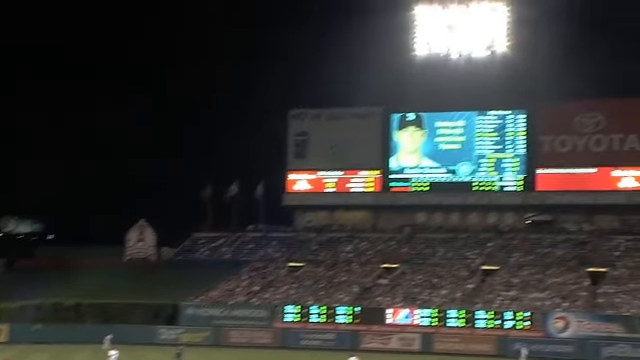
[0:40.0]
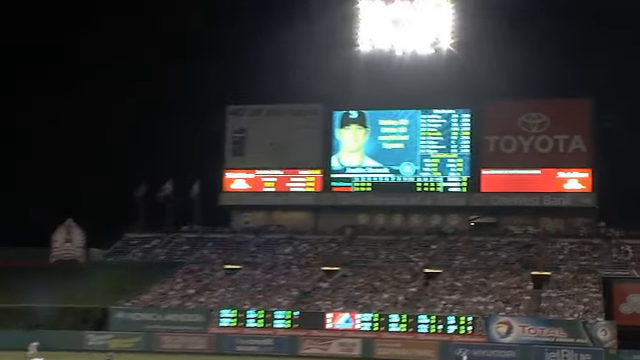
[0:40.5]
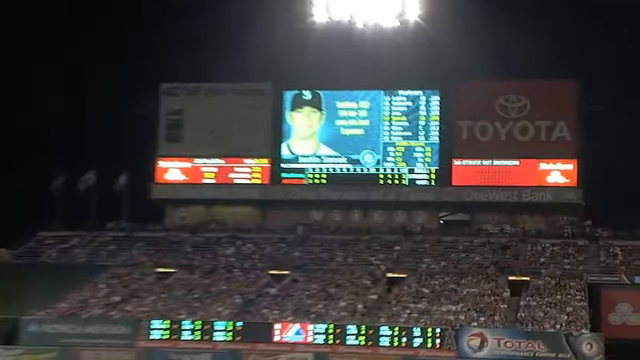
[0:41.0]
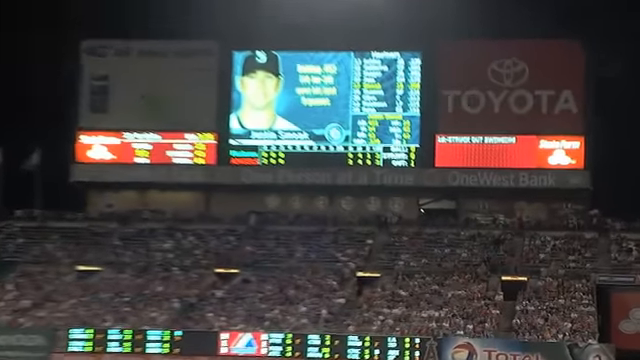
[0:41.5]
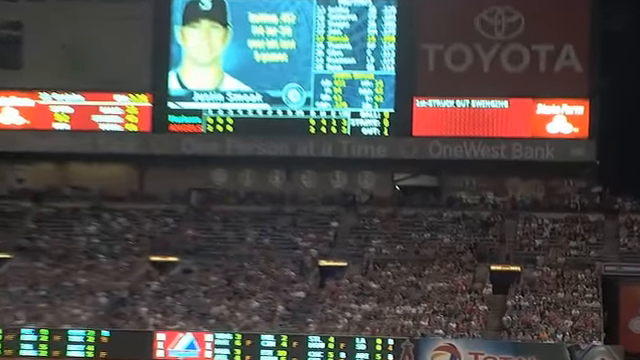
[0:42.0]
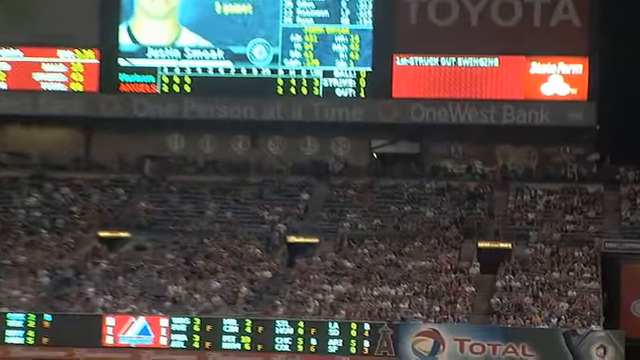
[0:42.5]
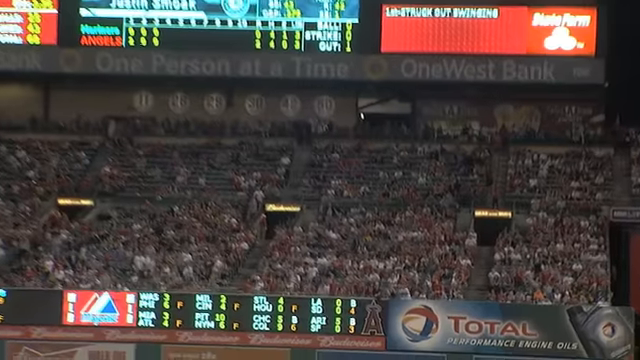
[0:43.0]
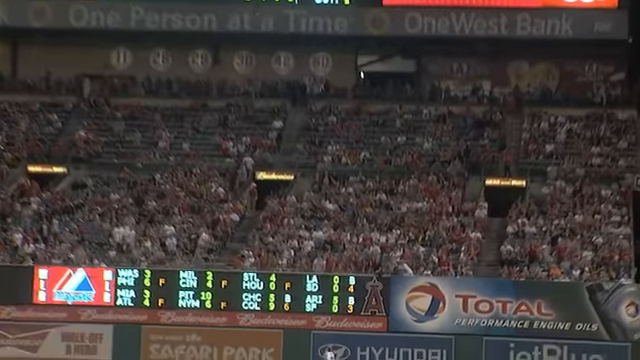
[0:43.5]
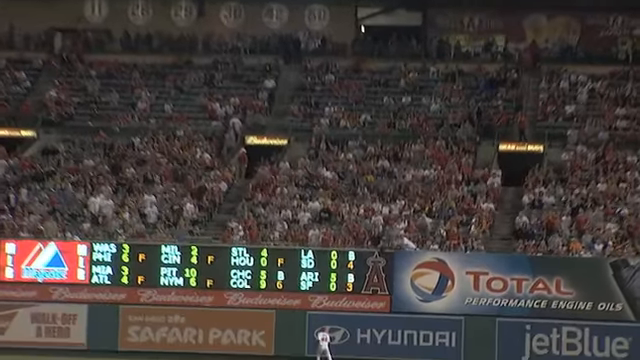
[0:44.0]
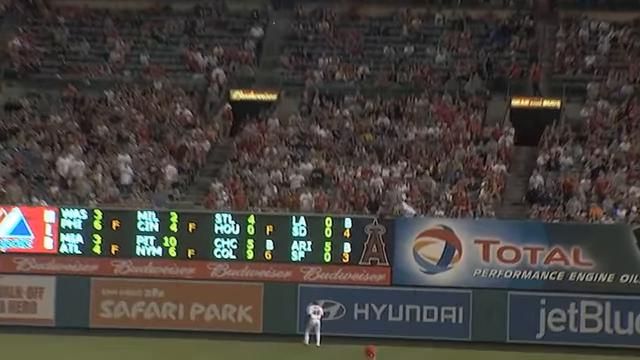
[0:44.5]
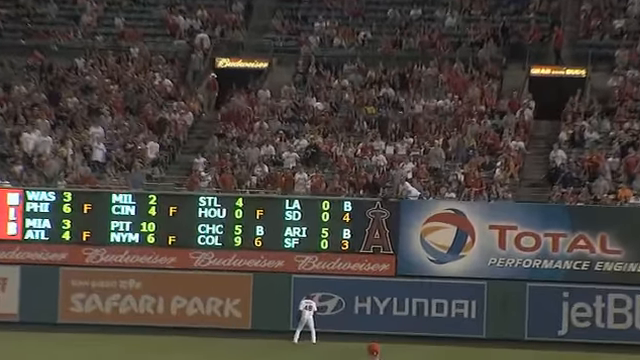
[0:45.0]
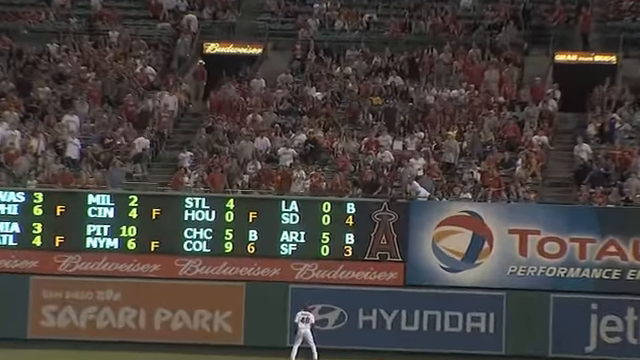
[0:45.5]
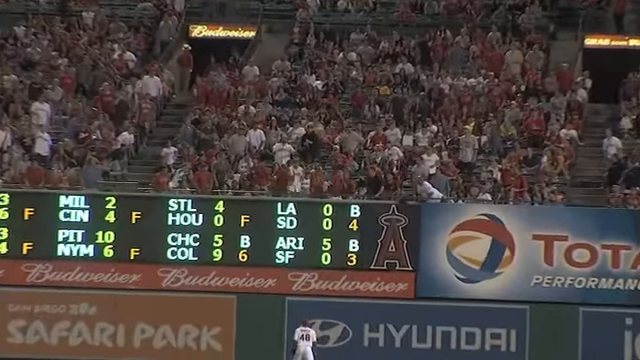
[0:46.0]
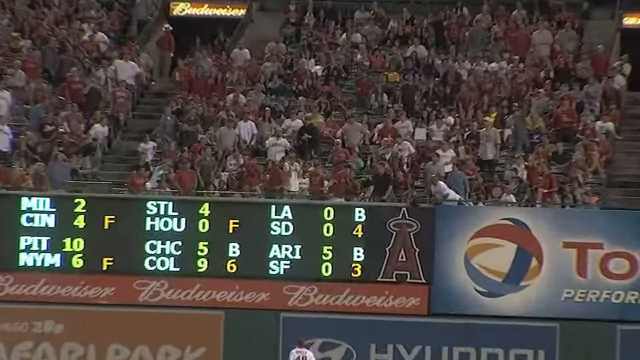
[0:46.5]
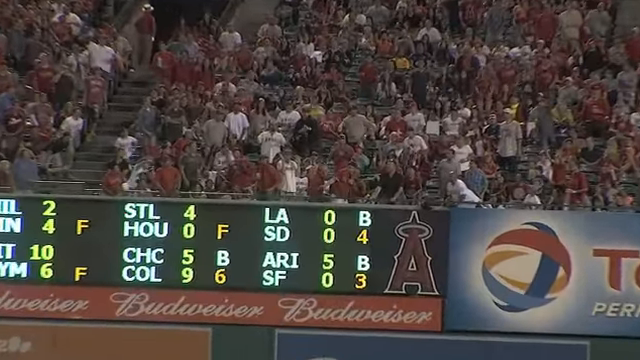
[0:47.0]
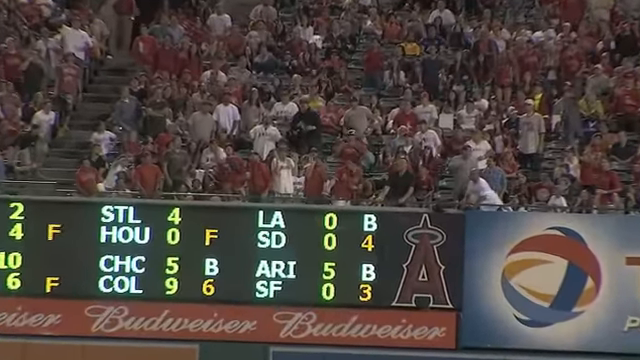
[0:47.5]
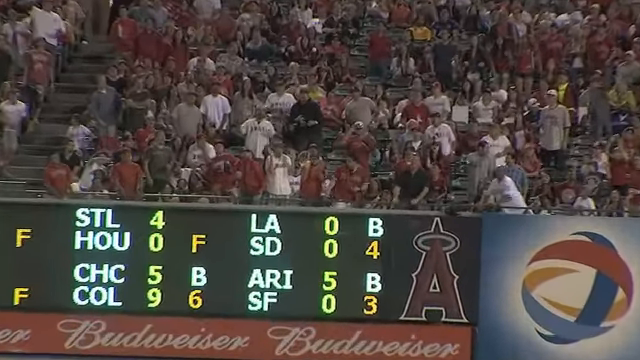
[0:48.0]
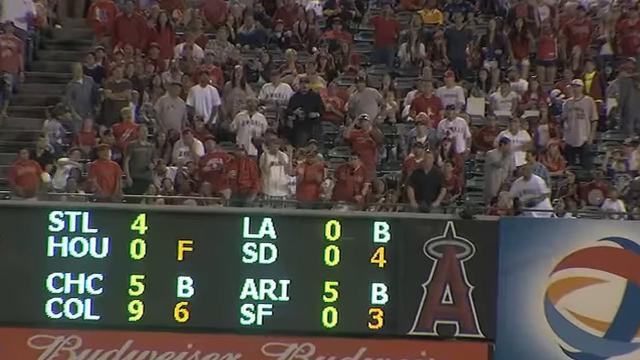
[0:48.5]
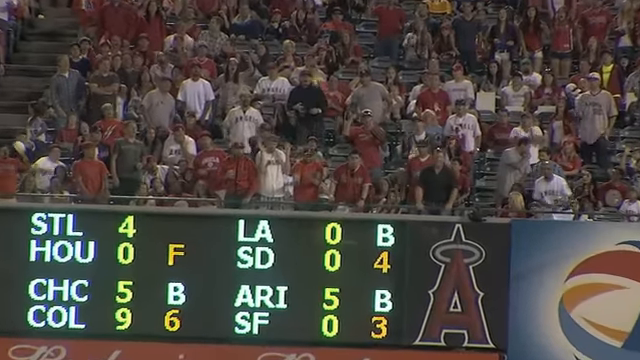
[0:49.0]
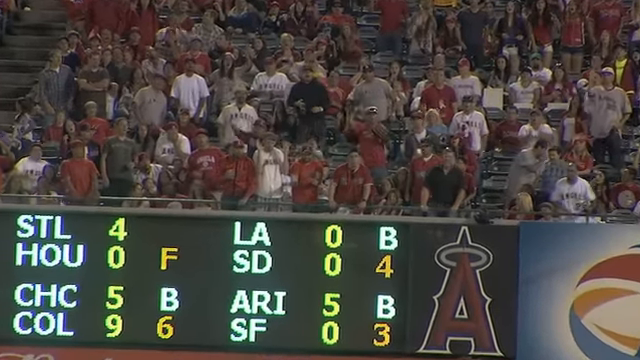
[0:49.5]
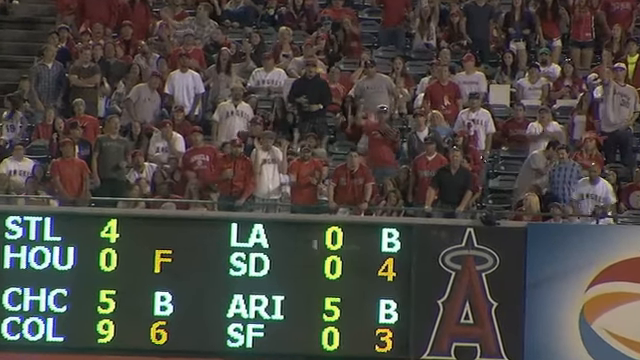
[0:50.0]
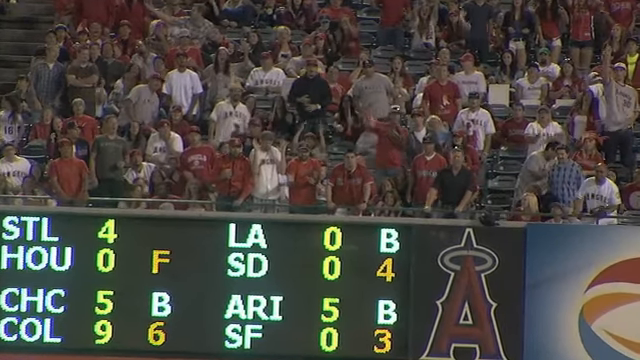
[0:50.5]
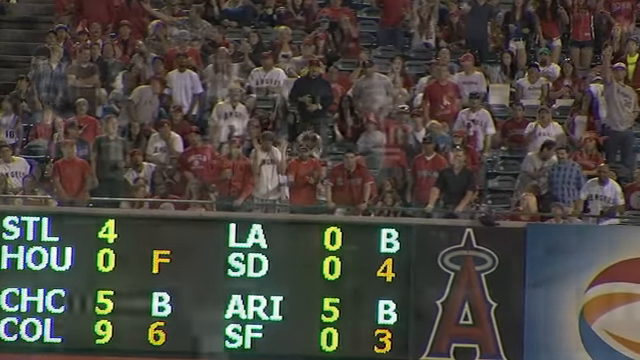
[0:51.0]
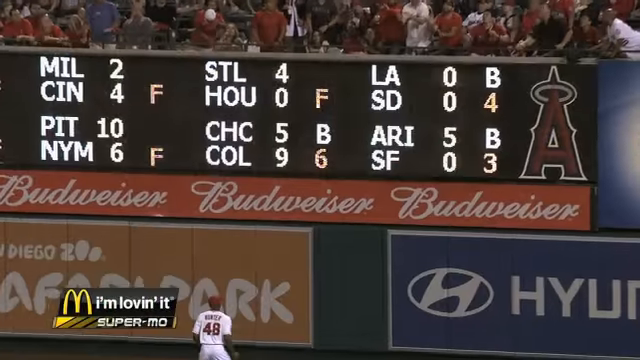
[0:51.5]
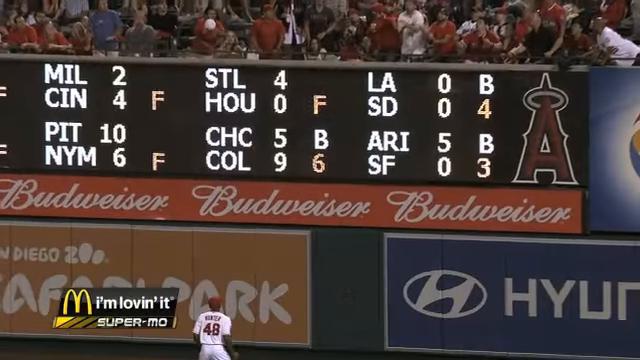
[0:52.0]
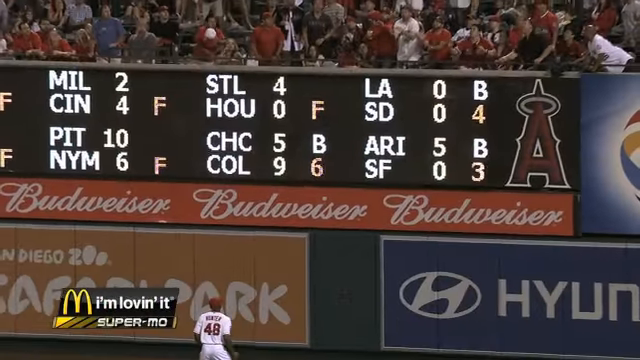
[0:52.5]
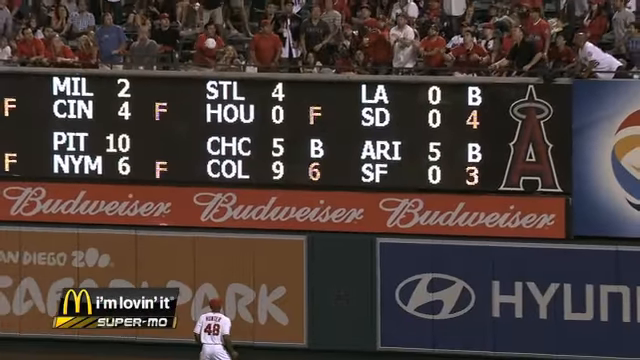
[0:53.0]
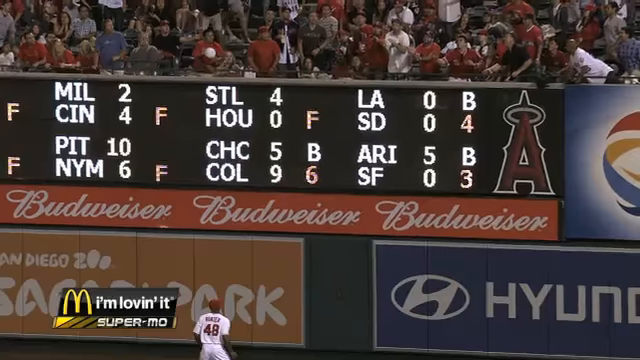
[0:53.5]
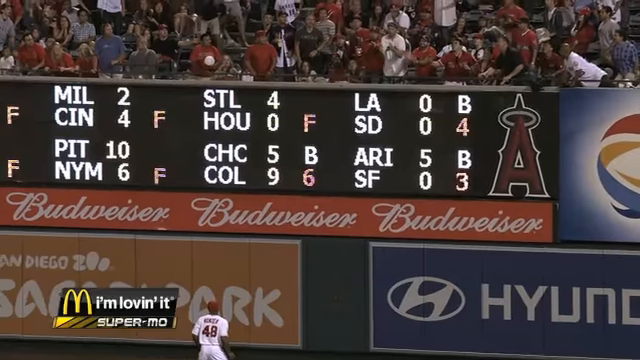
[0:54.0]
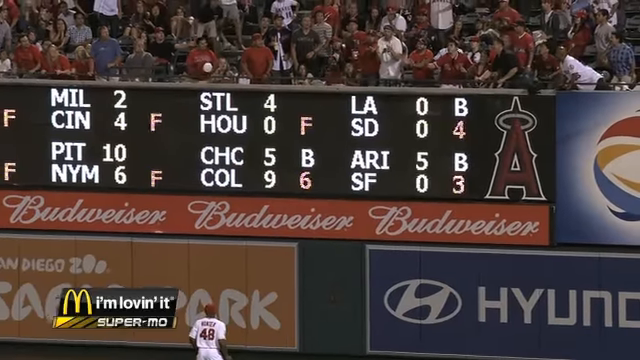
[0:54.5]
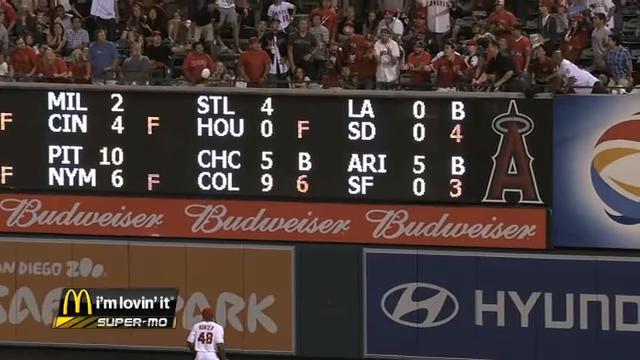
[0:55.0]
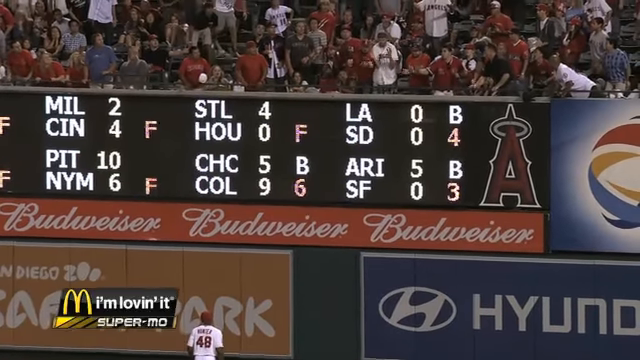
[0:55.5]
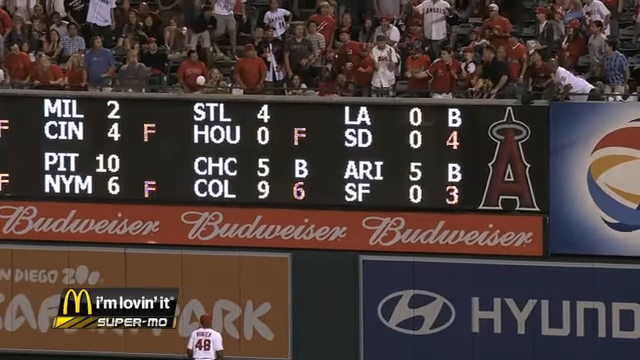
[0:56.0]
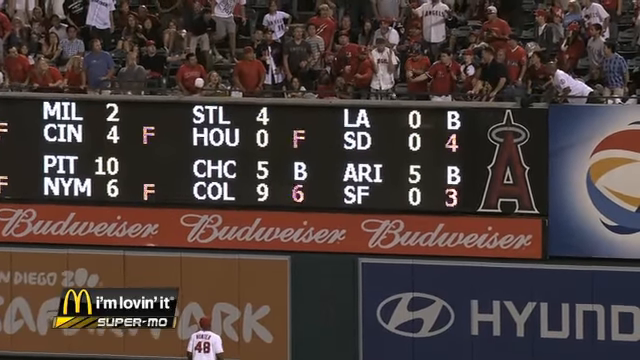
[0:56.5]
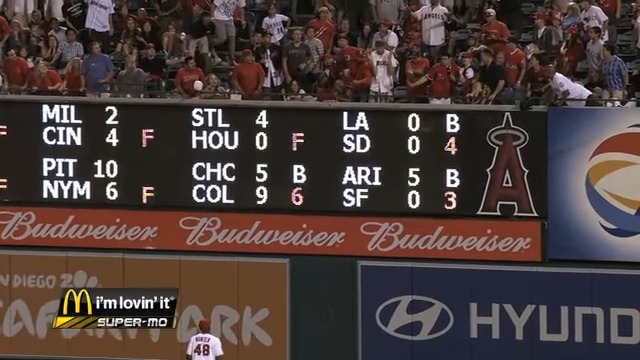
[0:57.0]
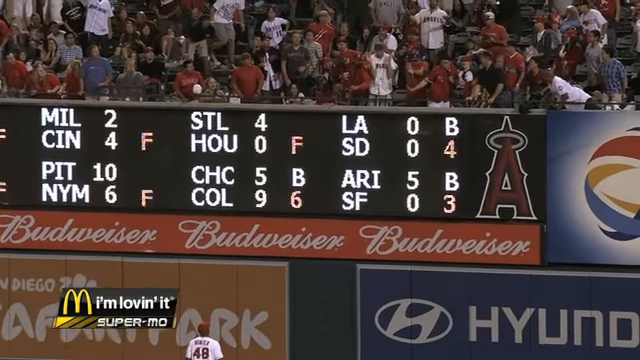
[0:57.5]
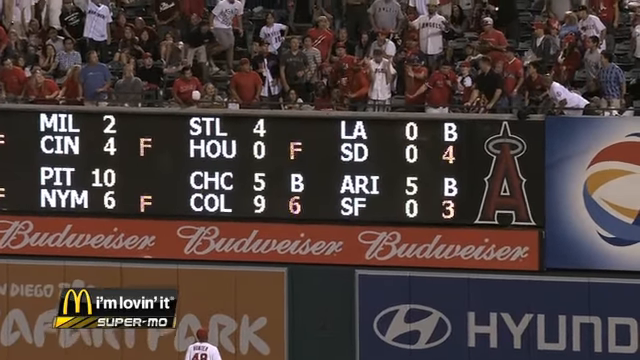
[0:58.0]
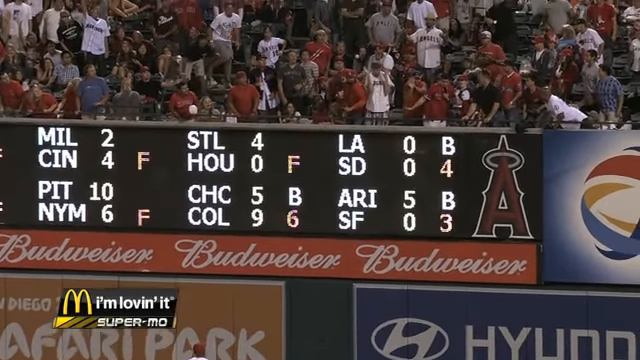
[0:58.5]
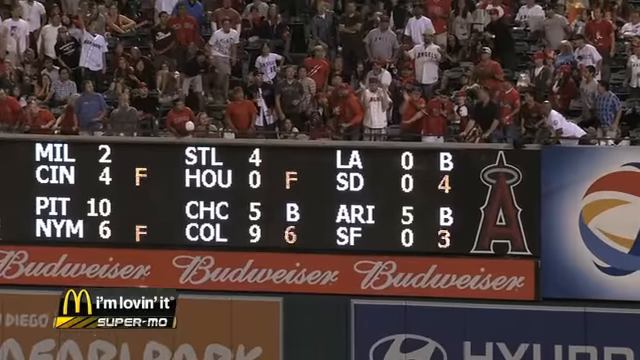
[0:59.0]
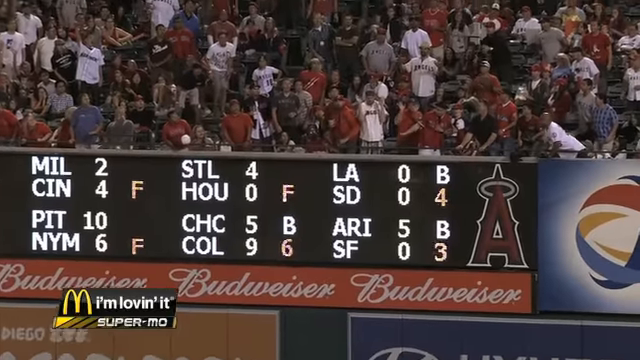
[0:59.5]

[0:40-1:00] The view looks high into the sky as the ball is elevated and comes down in a slow-motion replay. Coming toward the stands, the ball looks like it bounces on the top of the fence, goes up in the air, and then comes down onto the field. Another slow-motion angle shows the ball coming in, hitting the top of the wall, and bouncing back toward the field area. This is shown two different times in super slow motion. The fans are kind of looking as the ball slowly comes down, hits the top of the wall, slowly bounces up, and comes back onto the field.